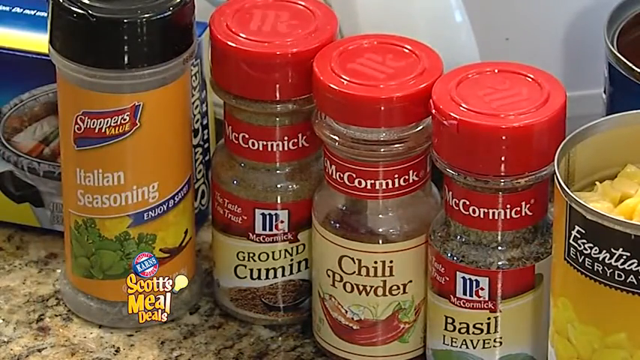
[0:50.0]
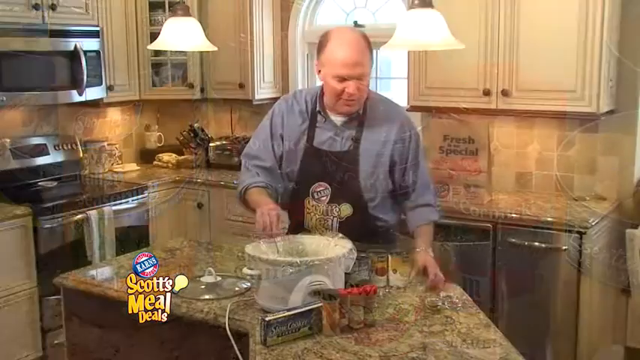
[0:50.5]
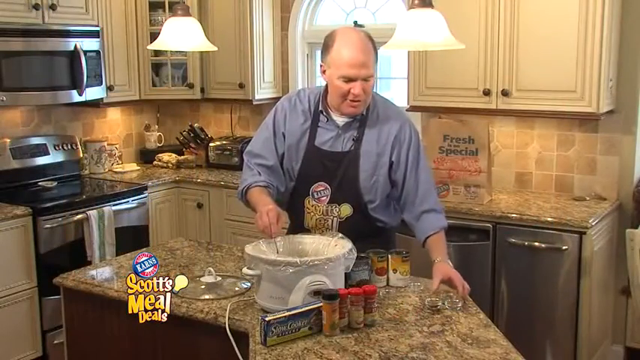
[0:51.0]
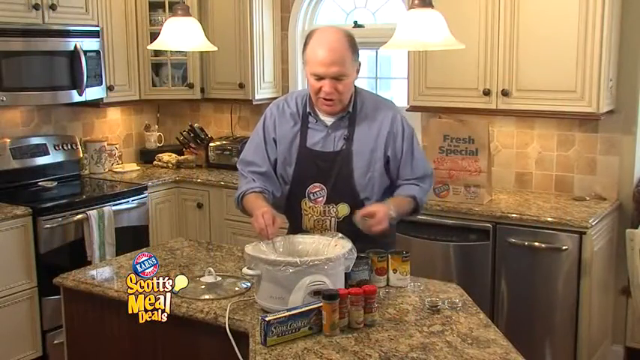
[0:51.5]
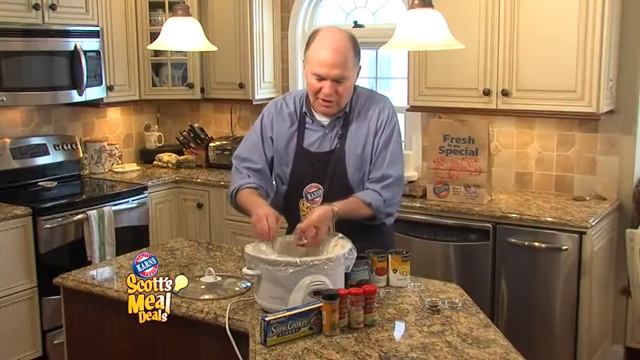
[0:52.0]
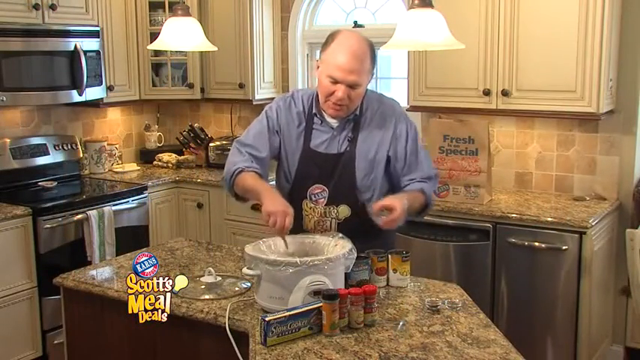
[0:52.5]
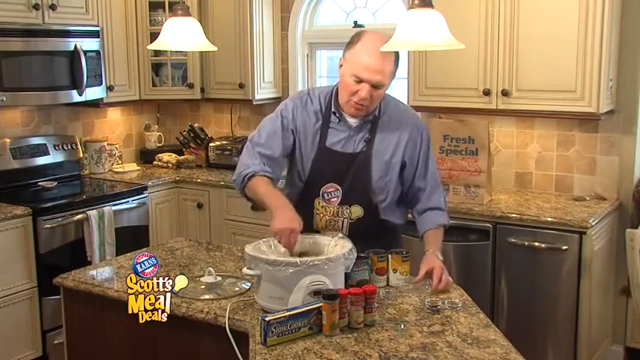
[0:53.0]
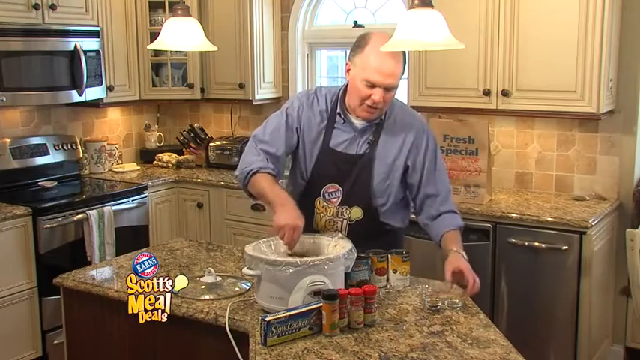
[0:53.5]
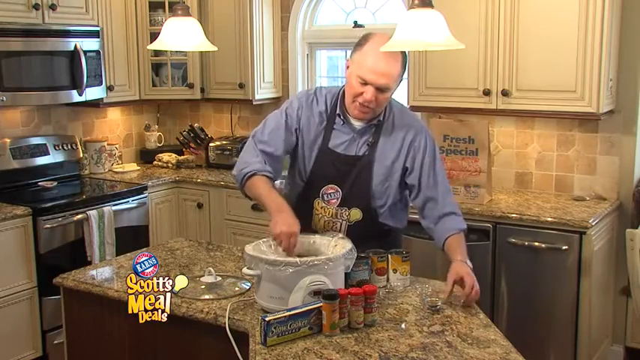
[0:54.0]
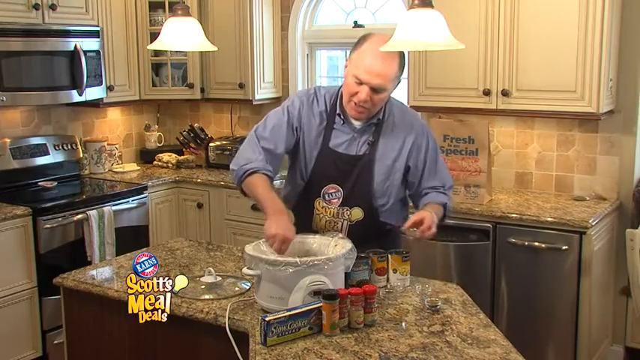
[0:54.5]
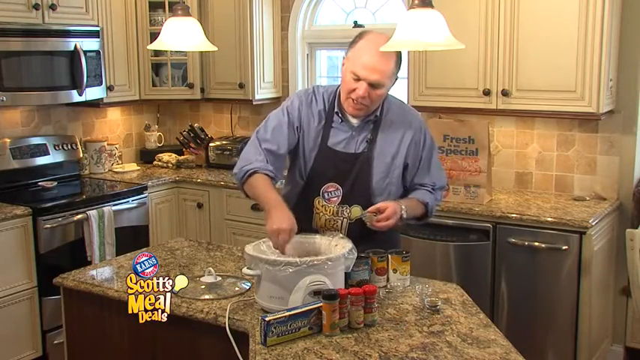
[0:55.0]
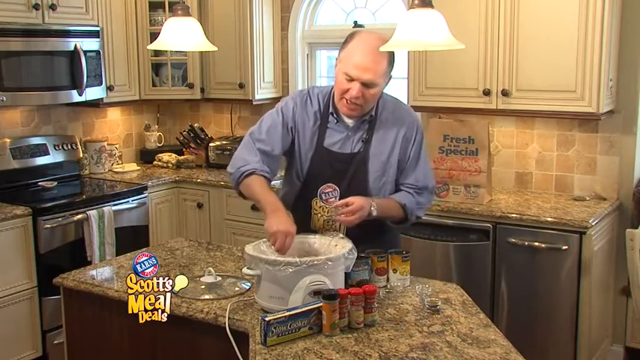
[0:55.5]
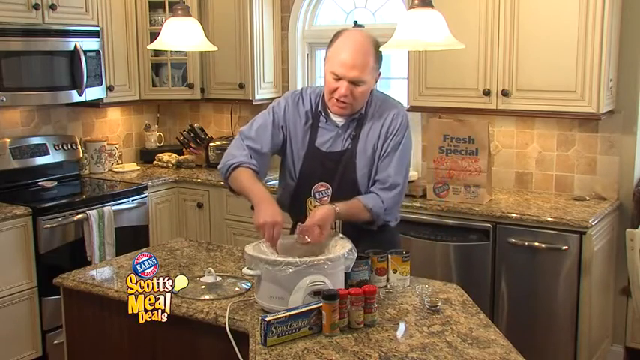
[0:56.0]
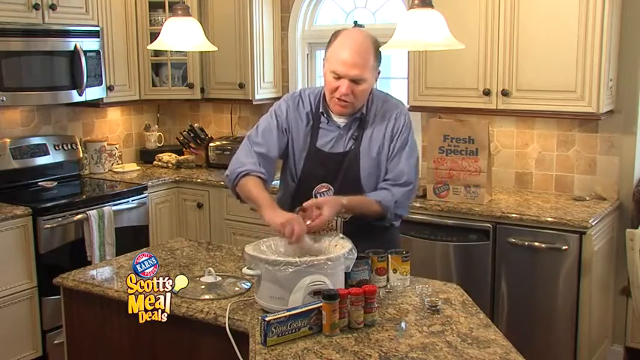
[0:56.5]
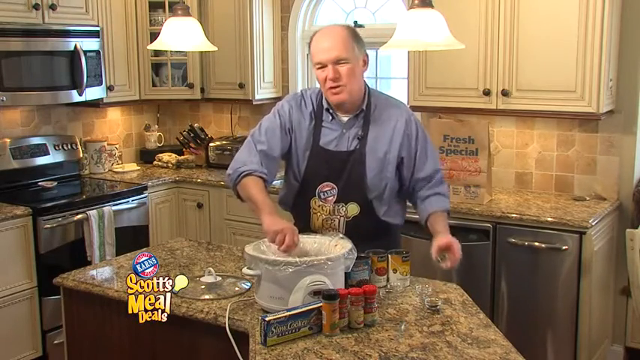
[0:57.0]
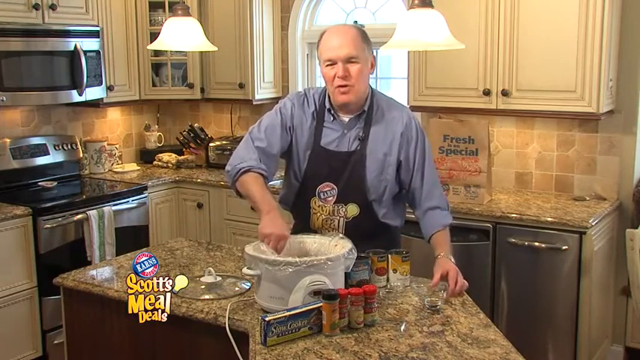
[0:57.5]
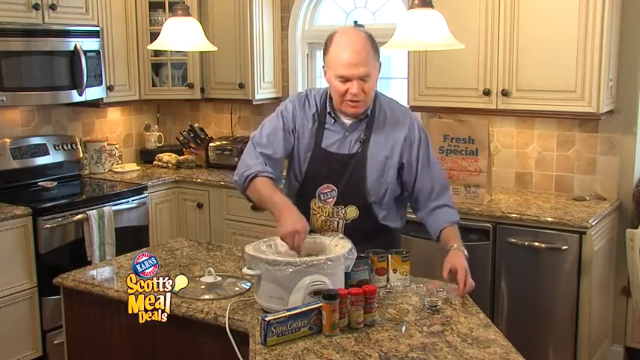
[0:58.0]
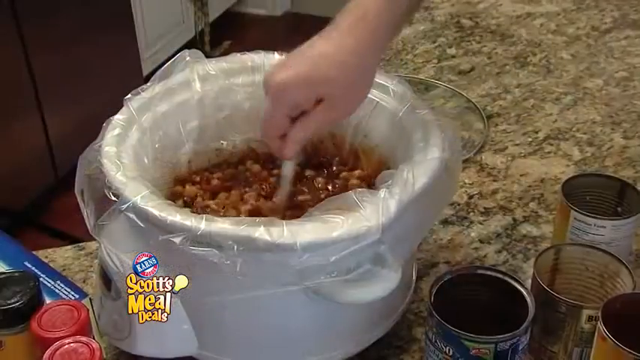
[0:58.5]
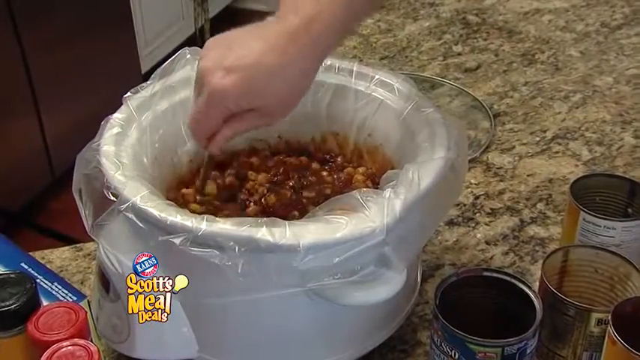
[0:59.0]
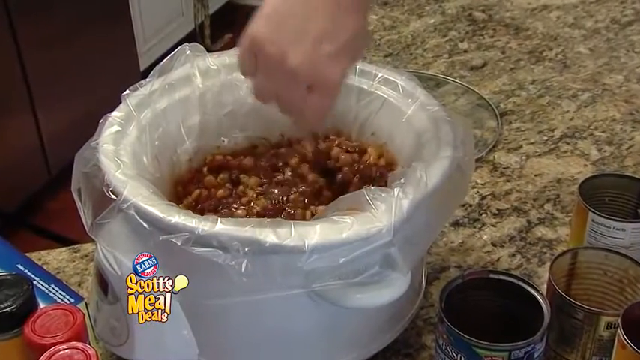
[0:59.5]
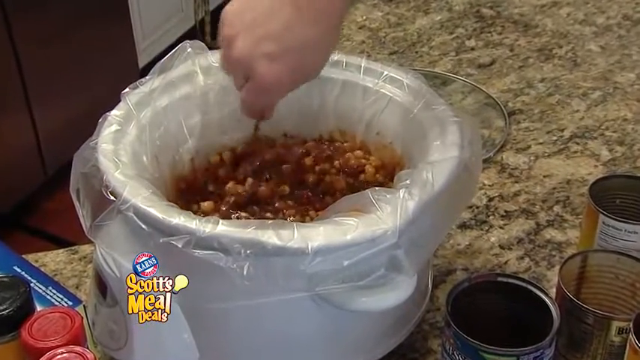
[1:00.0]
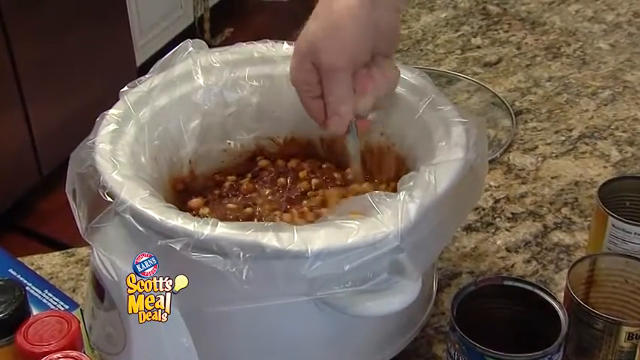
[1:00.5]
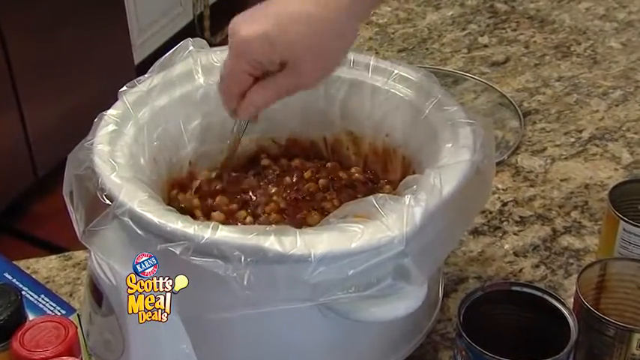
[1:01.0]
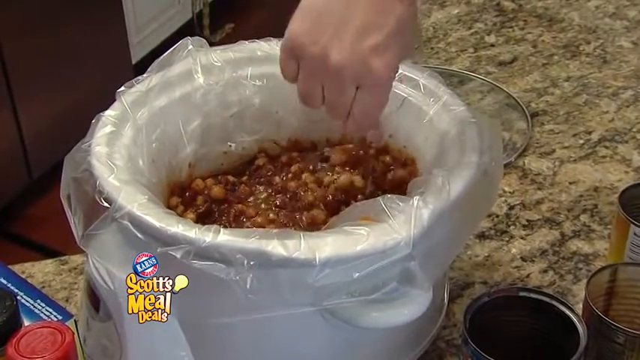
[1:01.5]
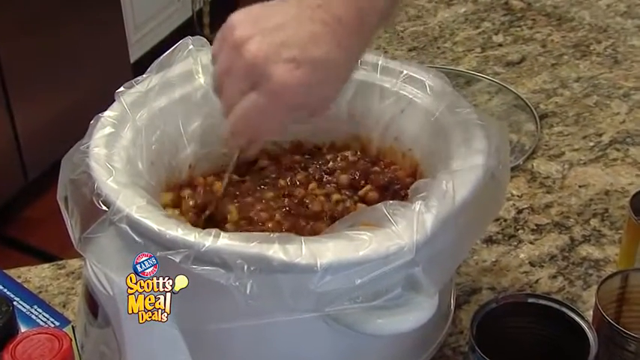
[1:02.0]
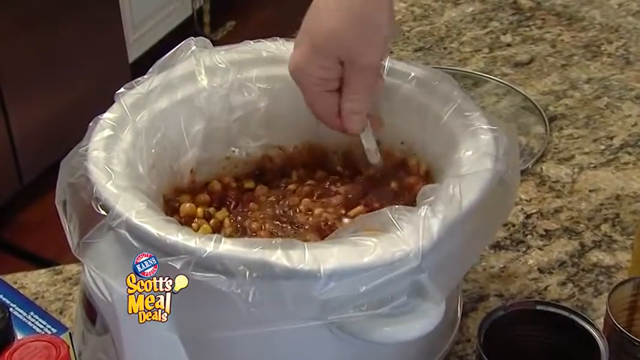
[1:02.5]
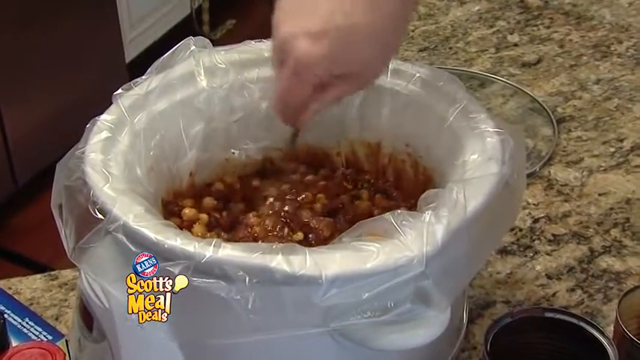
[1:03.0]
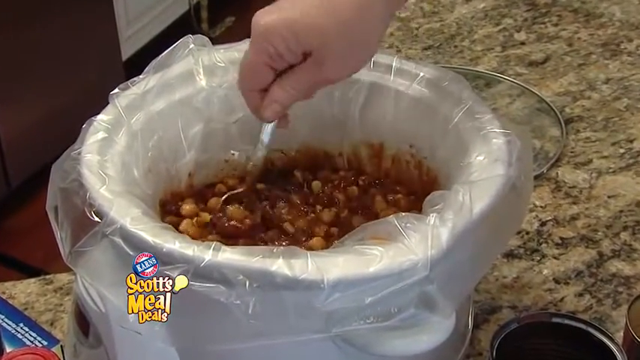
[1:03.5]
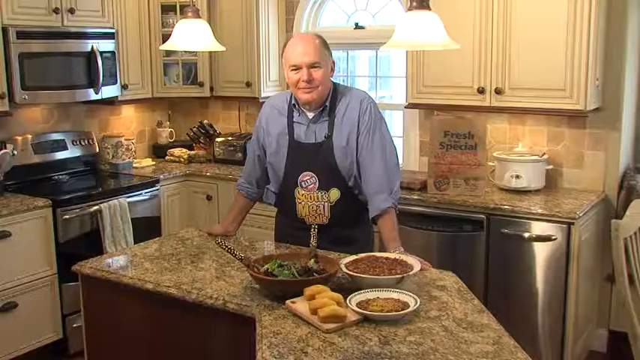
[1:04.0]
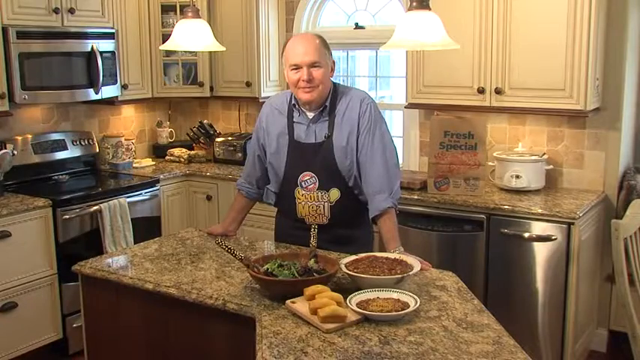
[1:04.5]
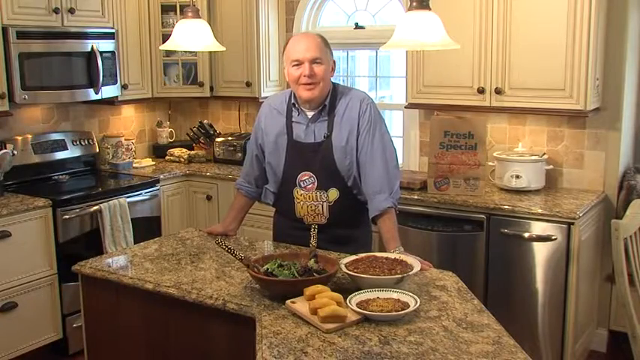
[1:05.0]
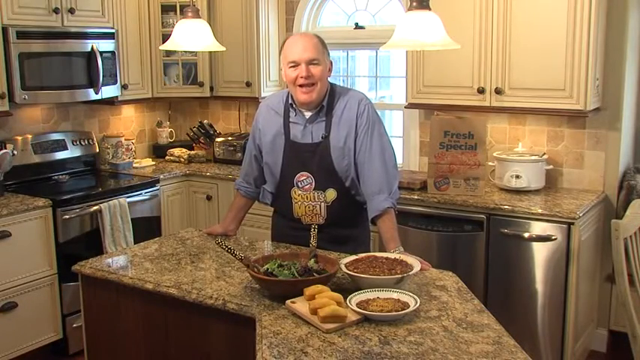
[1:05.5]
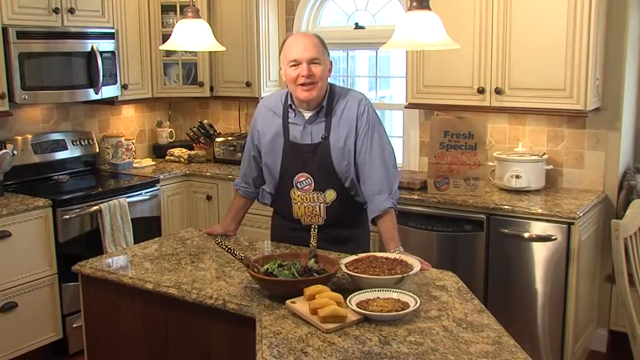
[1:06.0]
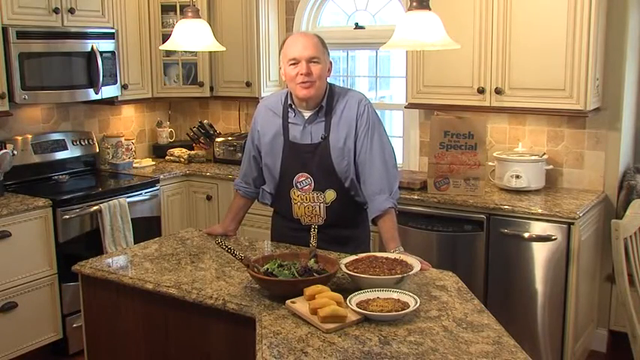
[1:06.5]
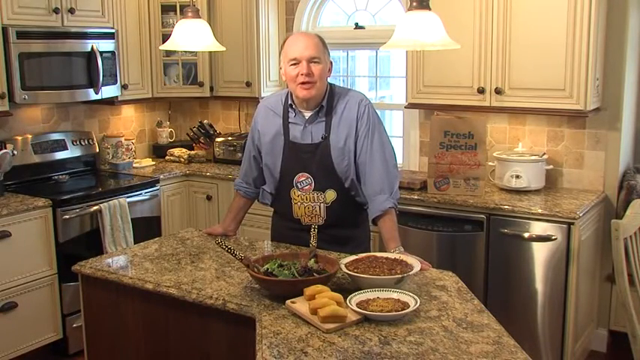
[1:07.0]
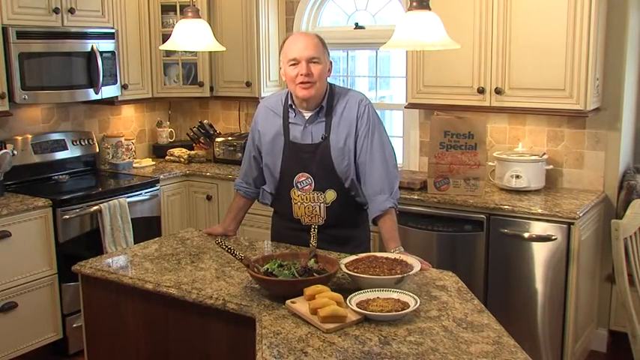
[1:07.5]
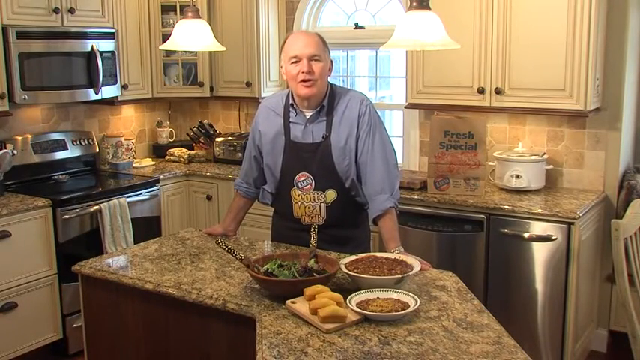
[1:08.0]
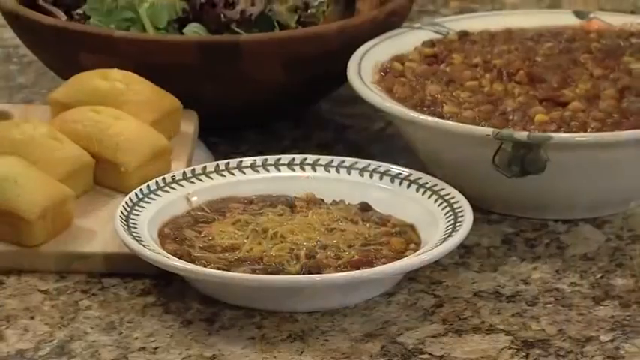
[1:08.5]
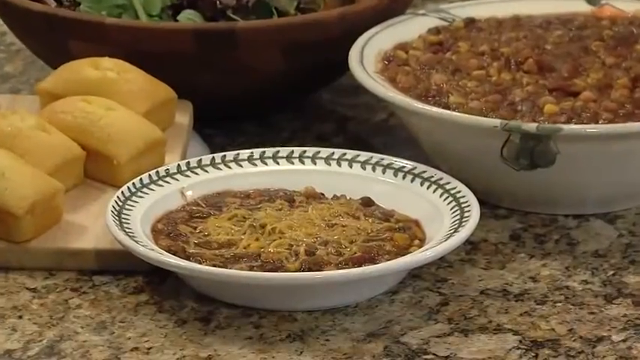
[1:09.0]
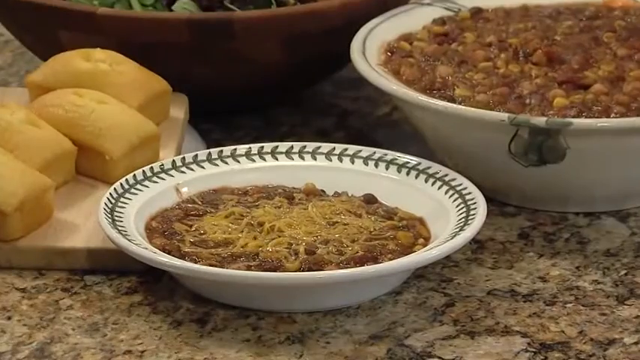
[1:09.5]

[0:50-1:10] After the first seasoning, the man dumps in three more seasonings, talking casually with friendly body language, and then starts combining all the ingredients in the slow cooker. The shot cuts to the slow cooker itself; the man is not visible, only his hand as he stirs the mixture, which looks akin to chili, with several types of beans, corn, some sort of tomato sauce and spices. Next comes a shot of the chili with salad and cornbread: a larger bowl of chili and a single-serving bowl of chili topped with shredded cheese. The cornbread is laid out on a wooden cutting board, and the salad is in a family-sized wooden bowl.